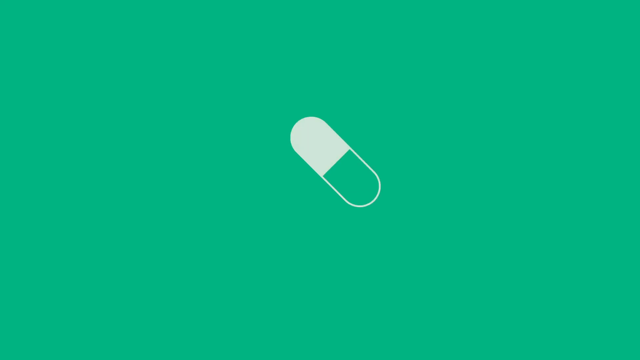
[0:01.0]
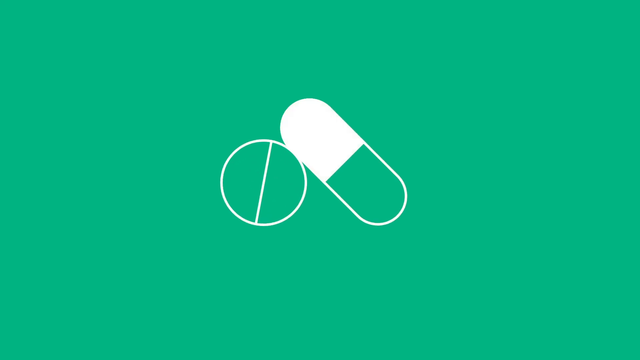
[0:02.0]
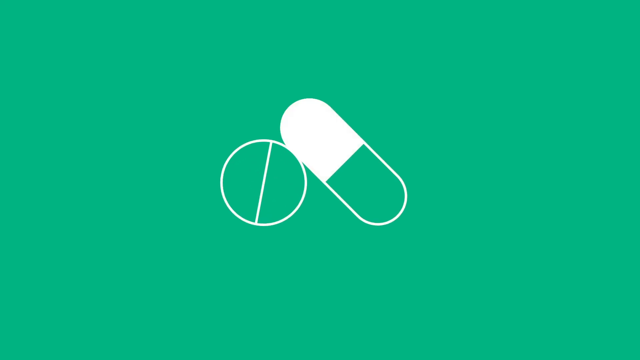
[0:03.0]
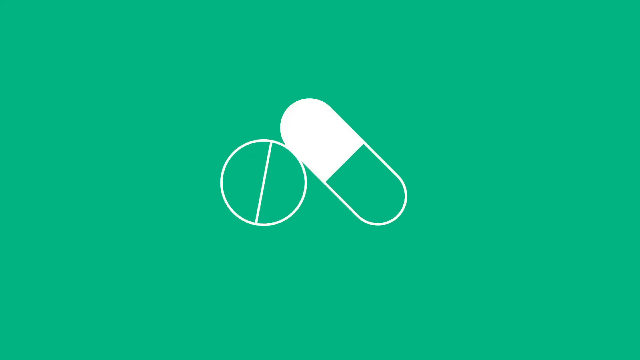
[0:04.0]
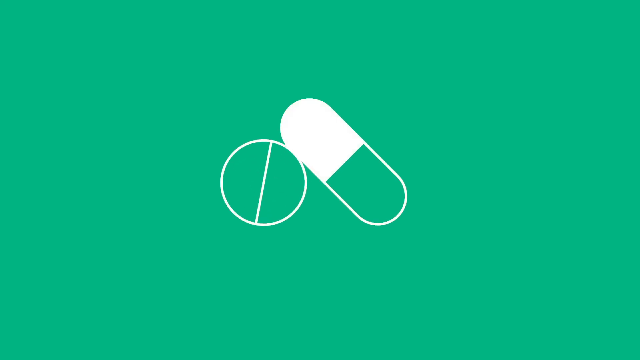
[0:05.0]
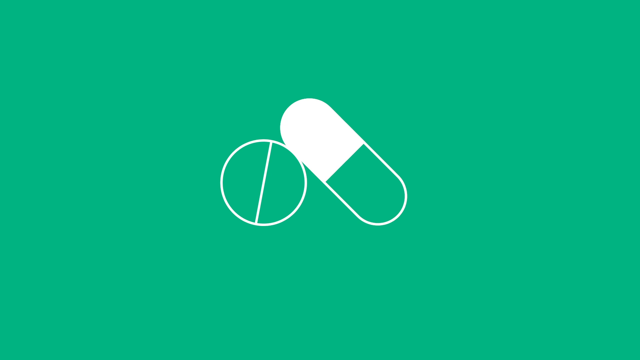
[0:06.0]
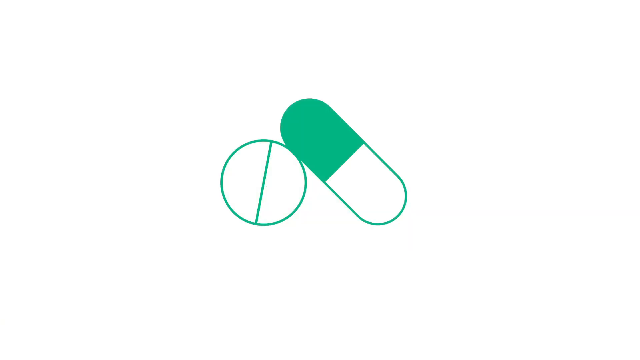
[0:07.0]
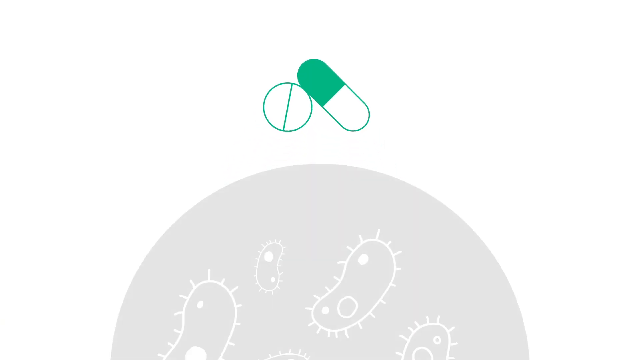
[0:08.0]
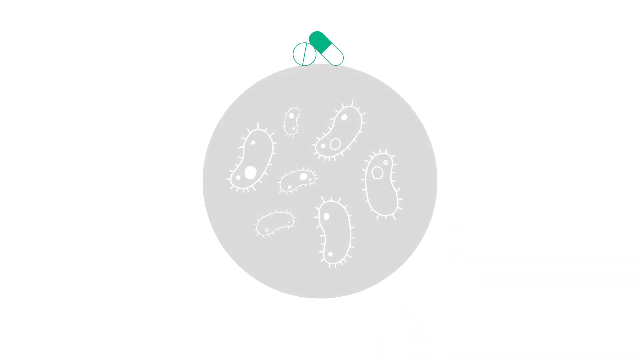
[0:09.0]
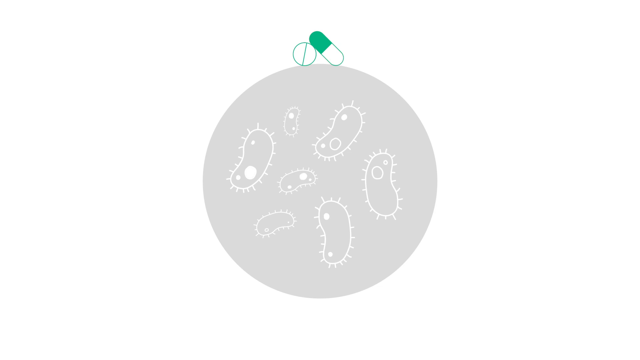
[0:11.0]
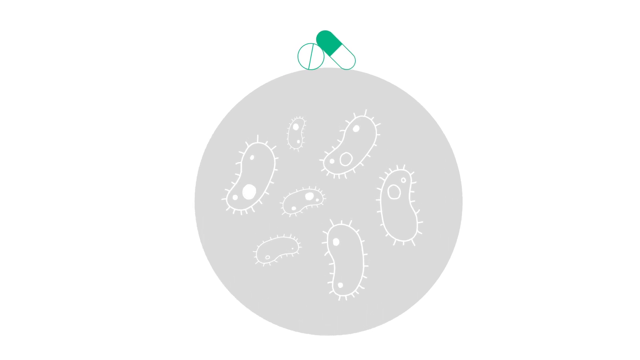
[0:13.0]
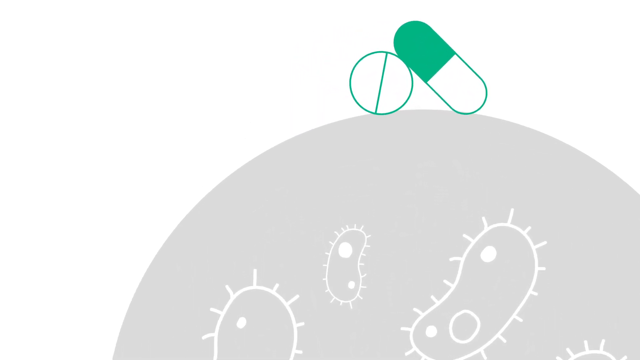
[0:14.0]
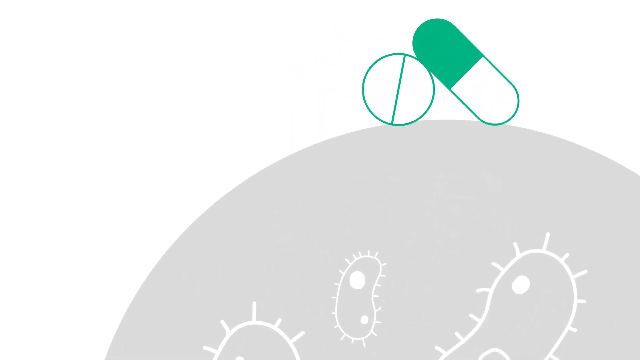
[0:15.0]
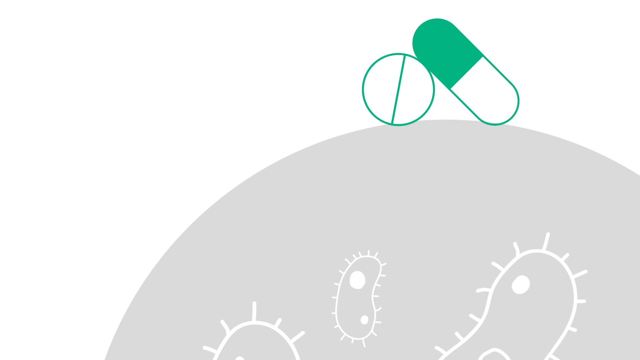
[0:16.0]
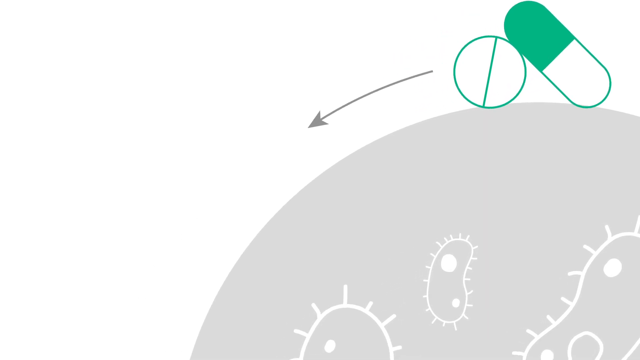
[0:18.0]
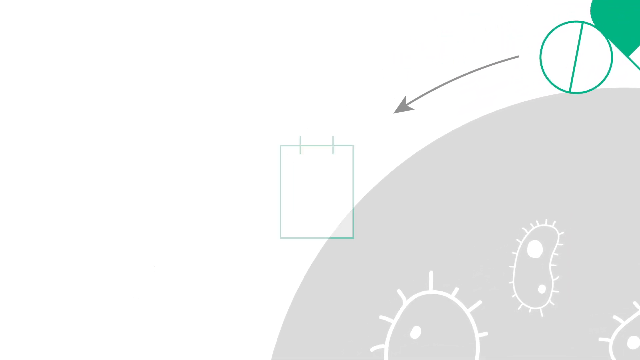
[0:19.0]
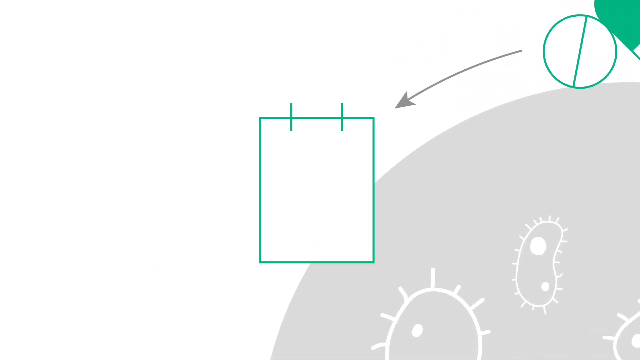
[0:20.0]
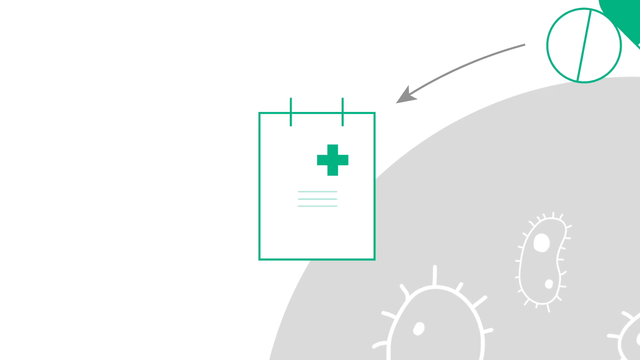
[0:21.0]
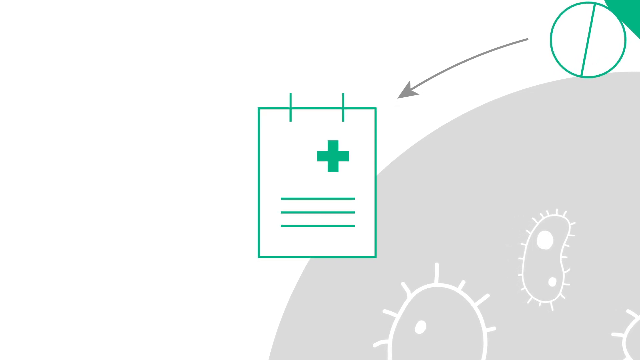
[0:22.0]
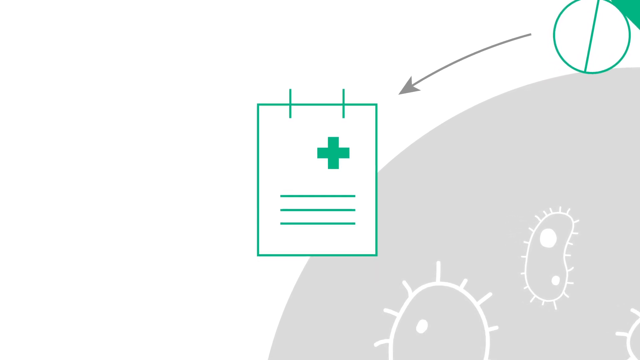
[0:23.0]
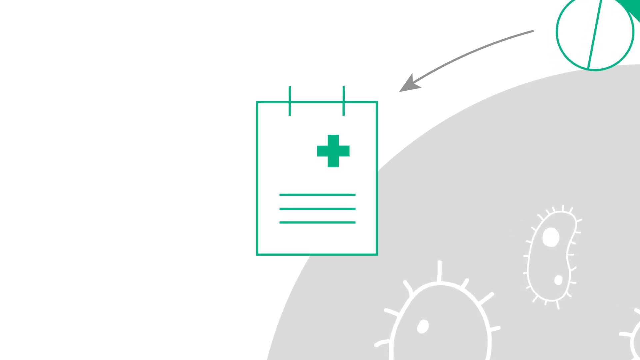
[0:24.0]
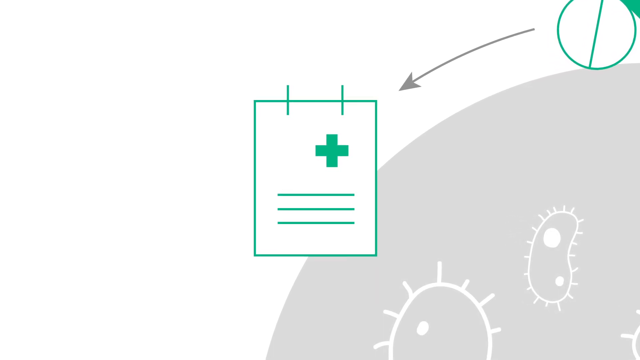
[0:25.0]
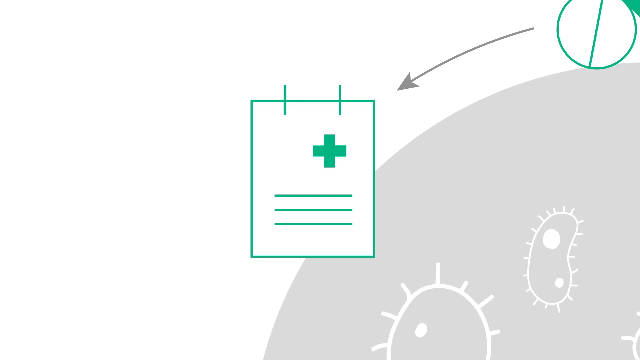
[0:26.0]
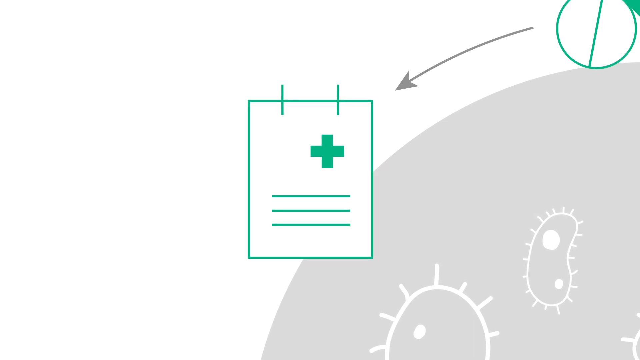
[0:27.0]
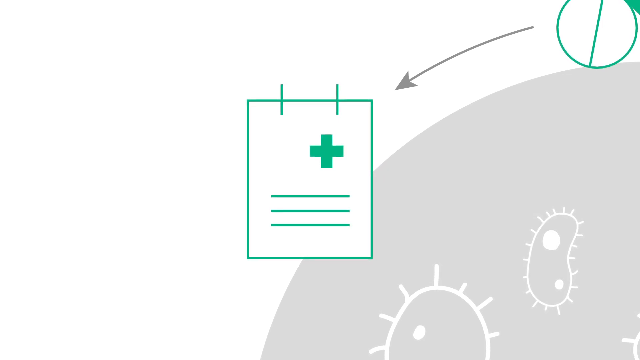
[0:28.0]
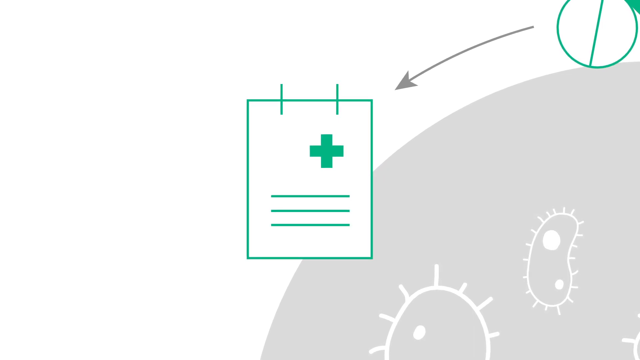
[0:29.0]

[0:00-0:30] A capsule and a tablet appear along with bacteria and viruses, and the capsule seems to be fighting against the bacteria and viruses. There are apparently eight capsules and a tablet, along with some bacteria and viruses.